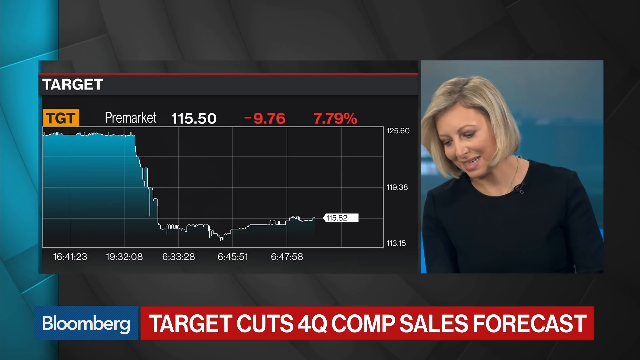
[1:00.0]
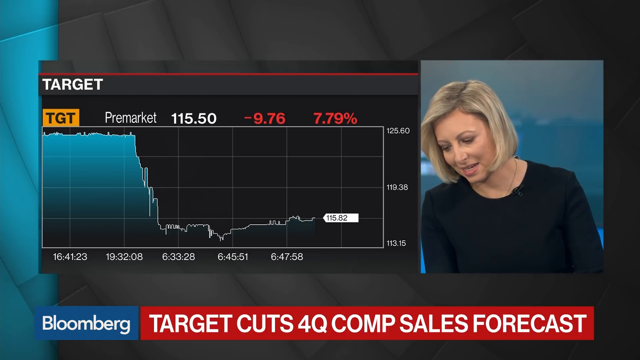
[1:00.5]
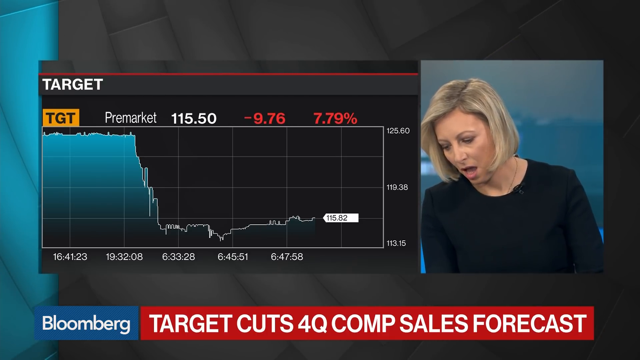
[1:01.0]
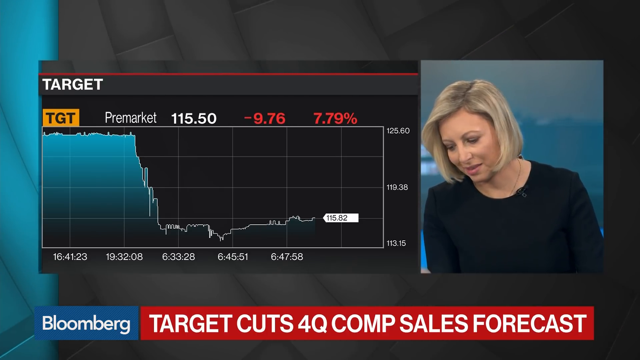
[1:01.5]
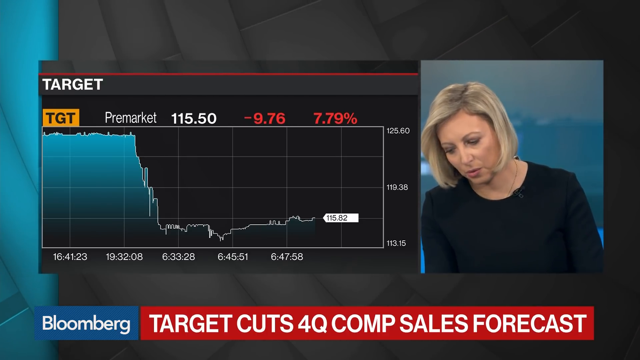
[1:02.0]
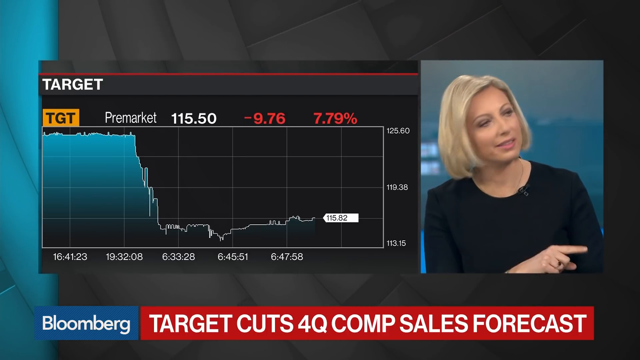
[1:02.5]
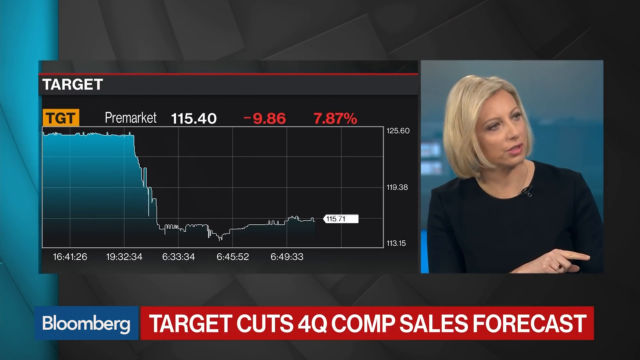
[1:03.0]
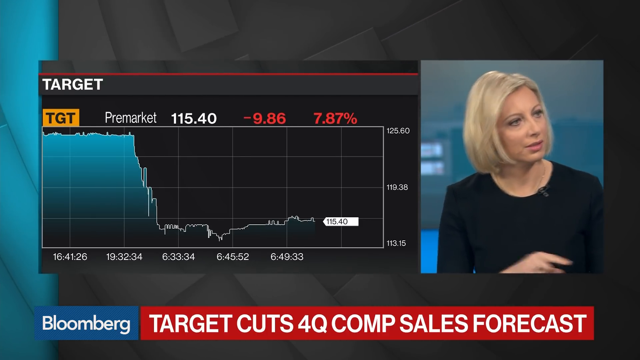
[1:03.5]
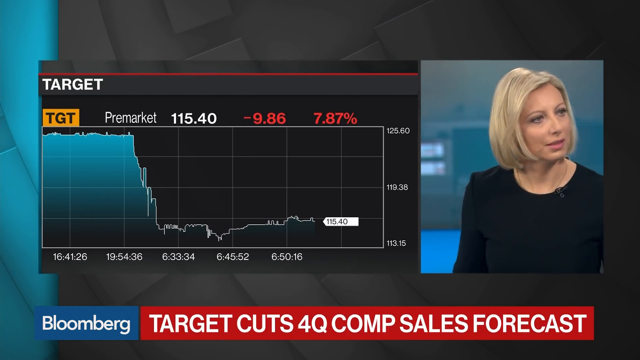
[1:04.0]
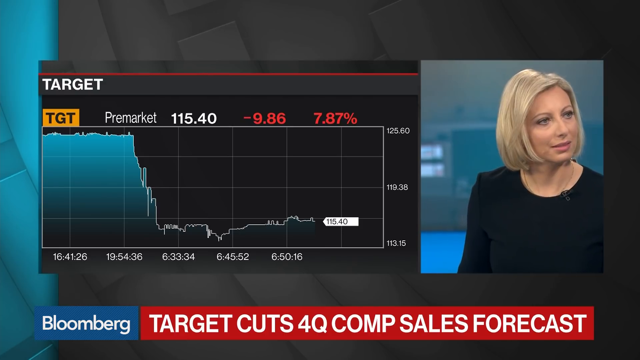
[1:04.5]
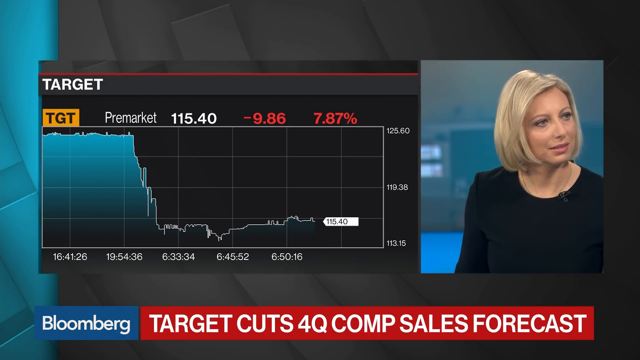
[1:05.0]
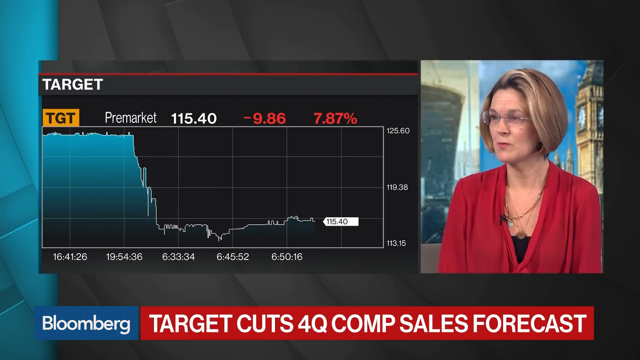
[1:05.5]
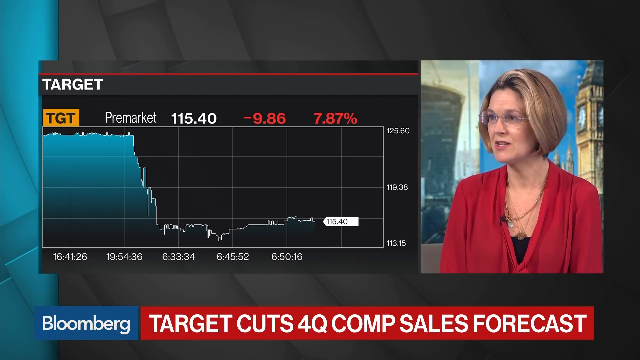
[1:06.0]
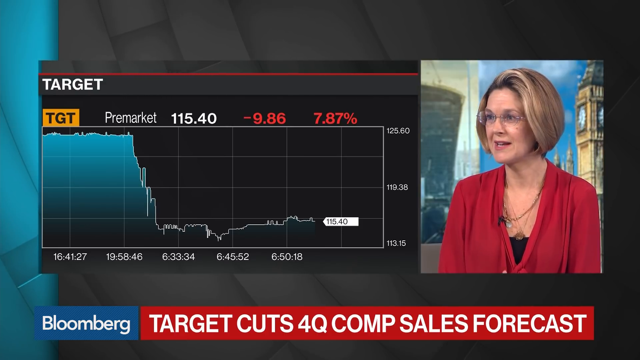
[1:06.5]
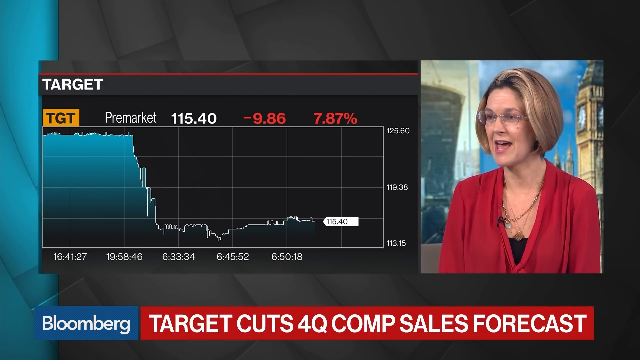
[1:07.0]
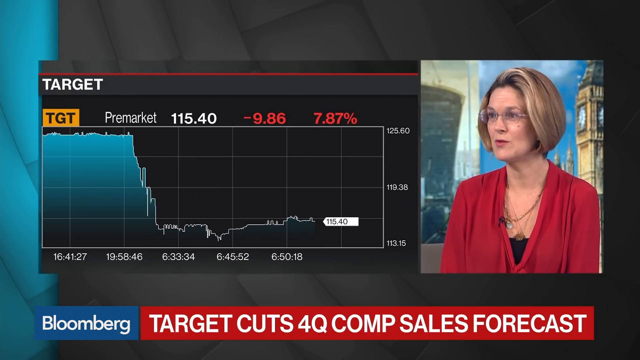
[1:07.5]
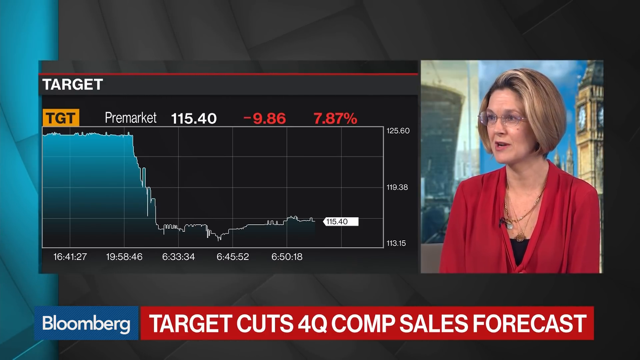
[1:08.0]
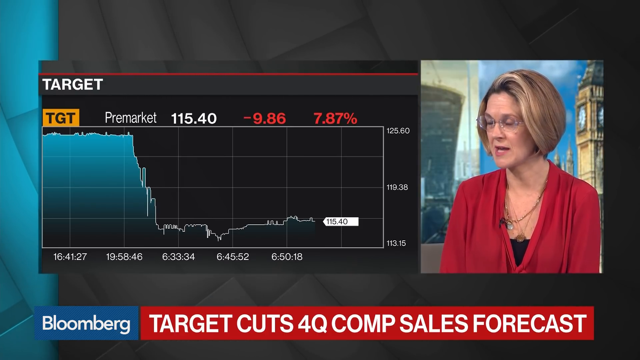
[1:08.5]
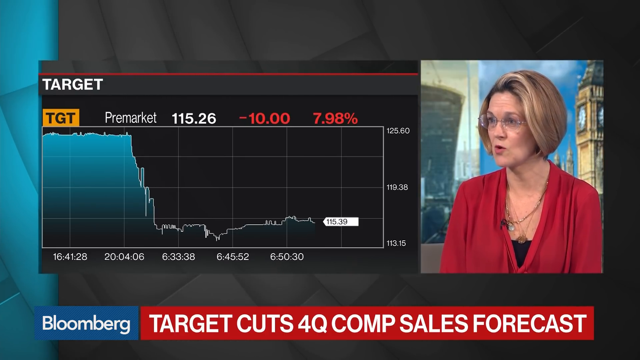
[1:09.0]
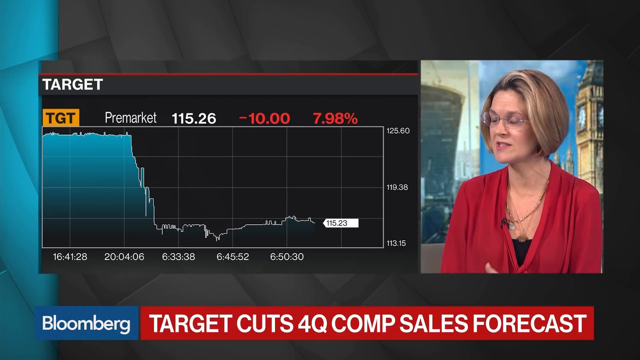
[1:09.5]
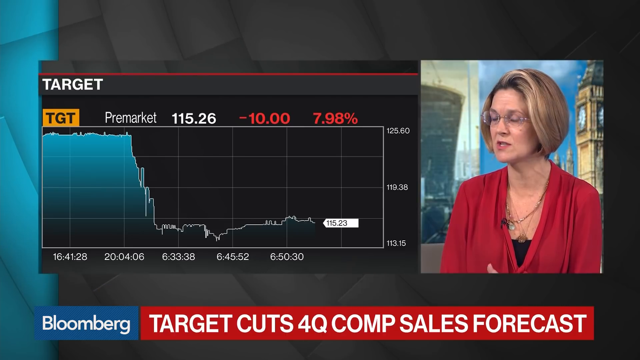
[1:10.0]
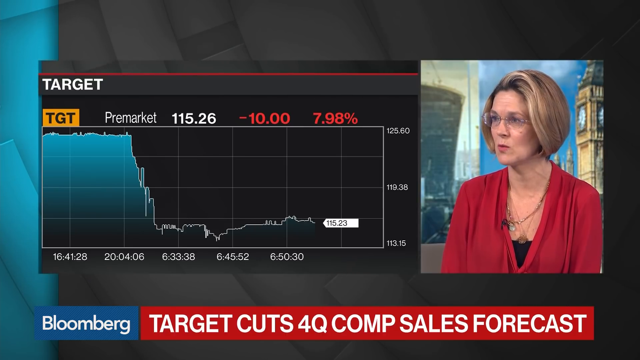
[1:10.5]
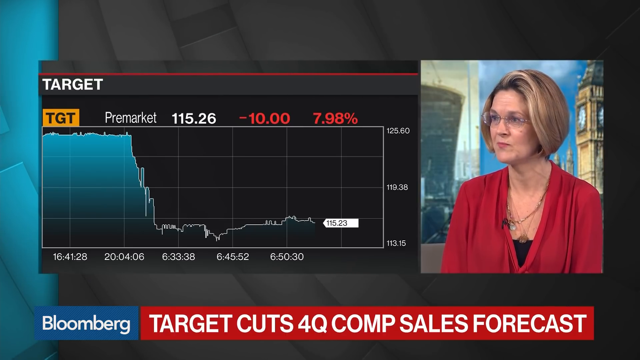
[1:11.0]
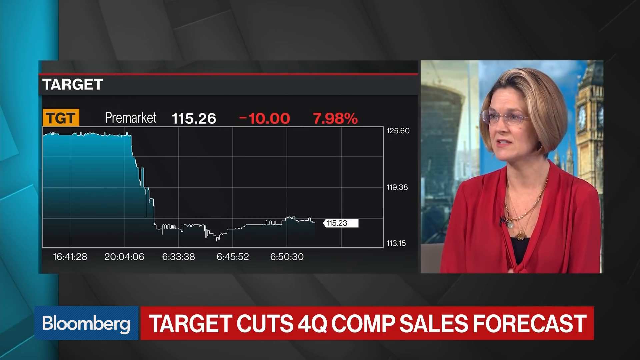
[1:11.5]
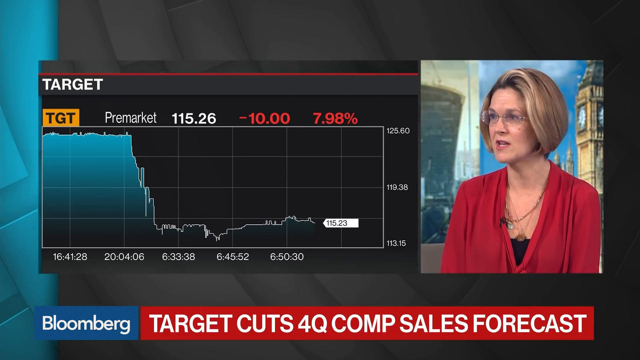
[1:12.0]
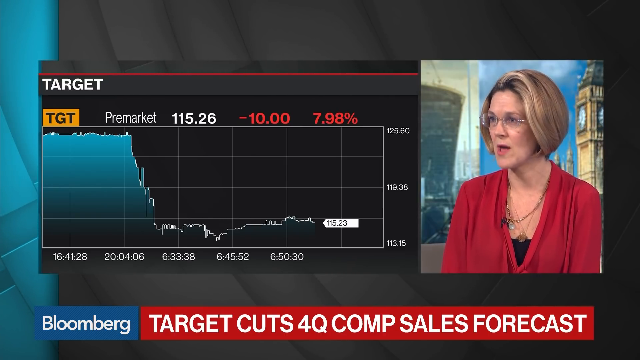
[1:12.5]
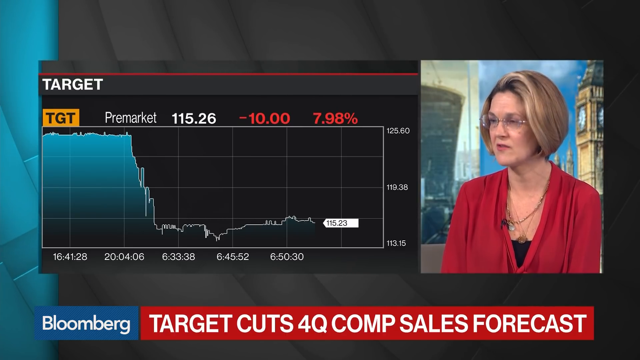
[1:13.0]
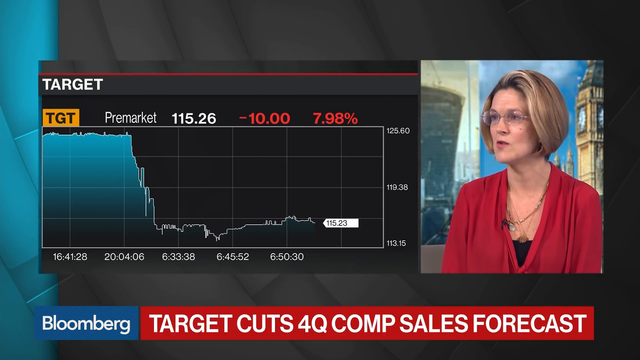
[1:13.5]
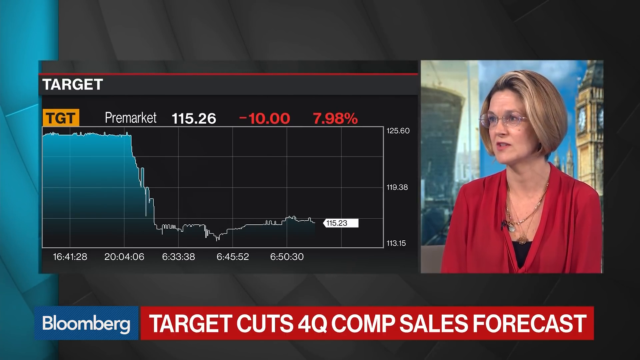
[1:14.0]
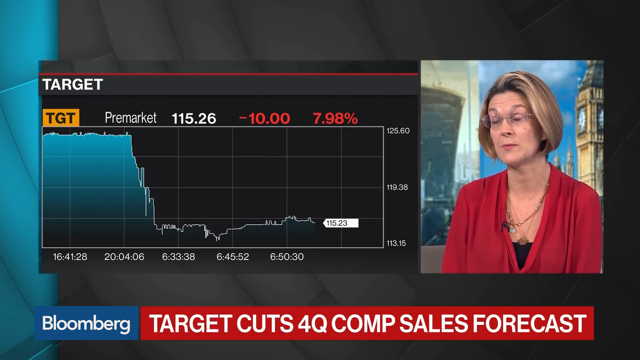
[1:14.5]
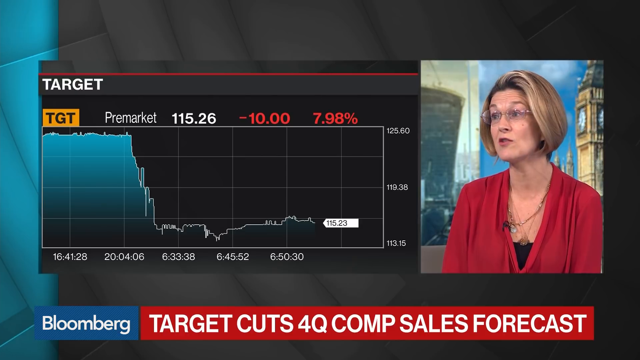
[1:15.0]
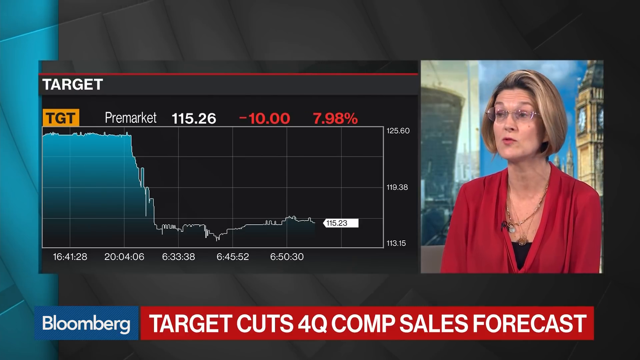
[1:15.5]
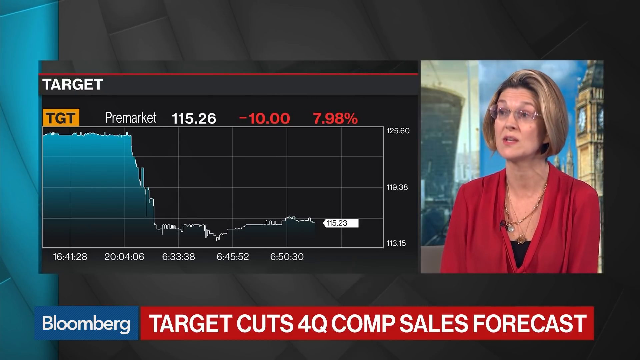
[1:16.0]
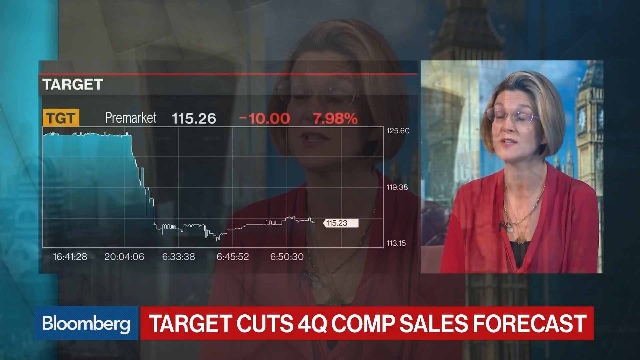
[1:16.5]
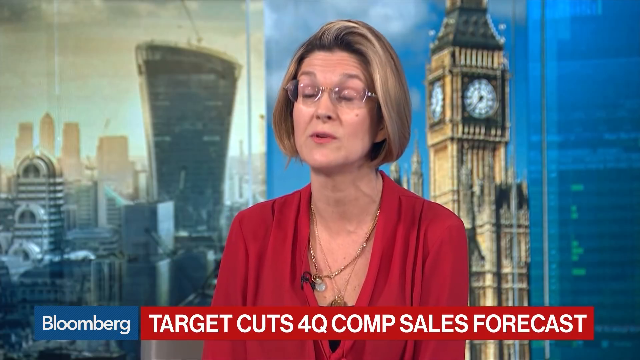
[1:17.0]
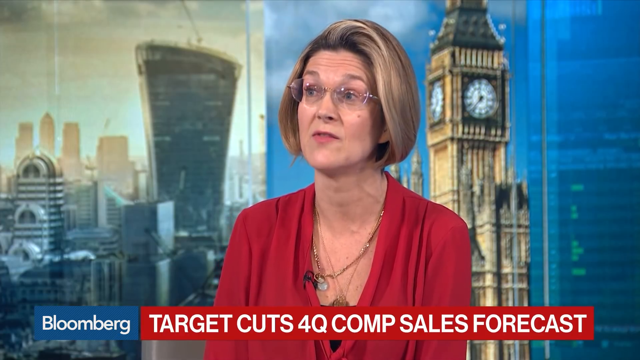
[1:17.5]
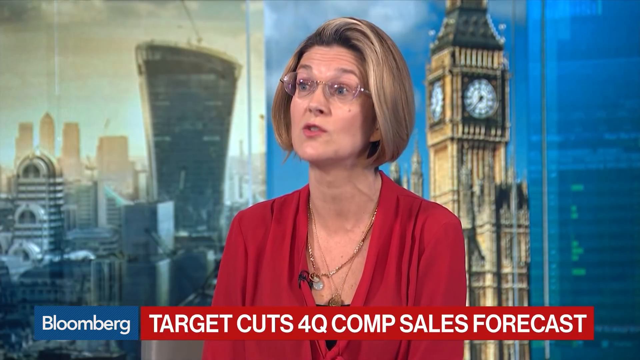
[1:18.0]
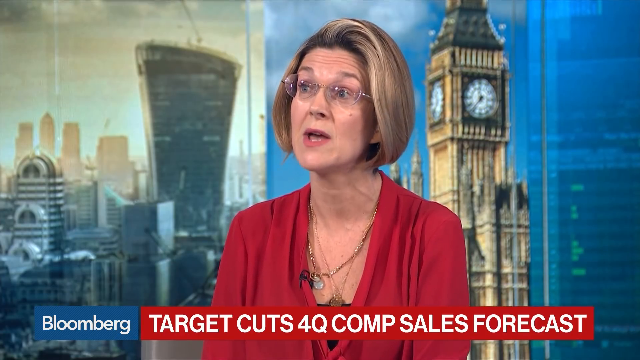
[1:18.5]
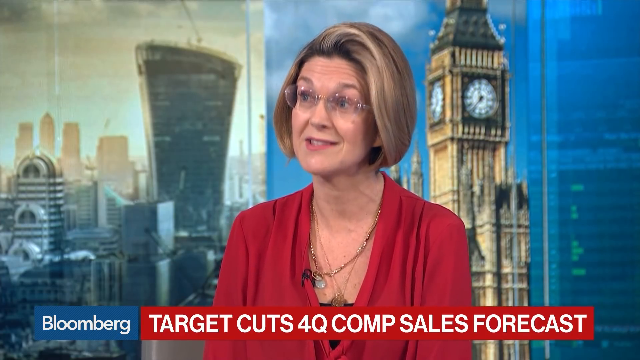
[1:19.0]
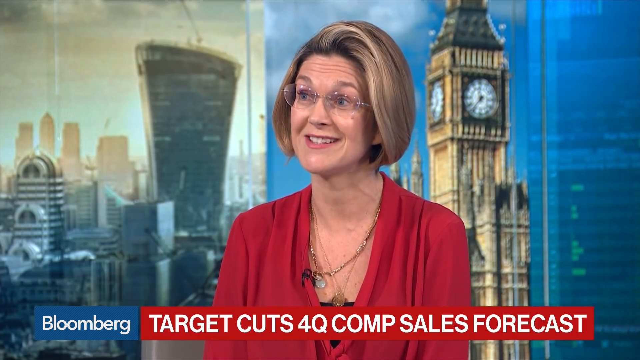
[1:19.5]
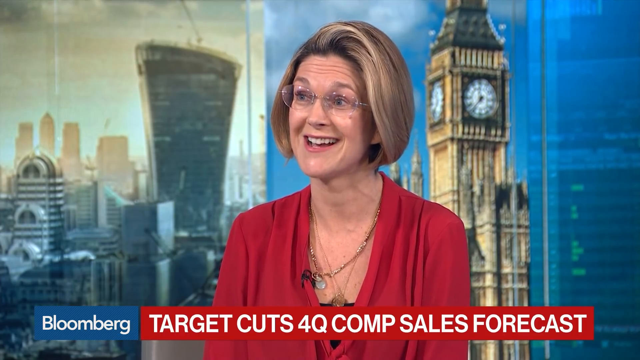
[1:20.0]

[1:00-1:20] Stock market information for Target is on screen. At the bottom of the screen it says "Bloomberg", and right next to it is a red banner reading "Target Cuts 4Q Comp Sales Forecast". To the right of the stock information, a woman in a red blouse and glasses speaks on camera to someone sitting beside her. The scene changes, the stock market information goes away, and only the woman in the red blouse is shown speaking. She smiles as she looks at a woman in the studio with her, who has blonde hair, wears a black dress, and listens as the woman in red speaks.